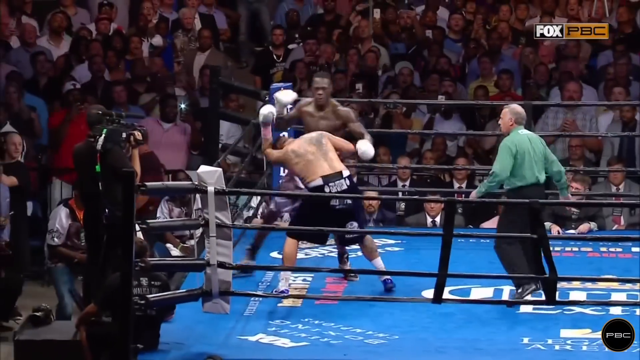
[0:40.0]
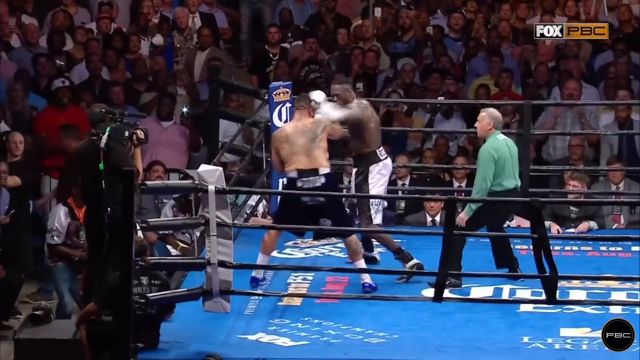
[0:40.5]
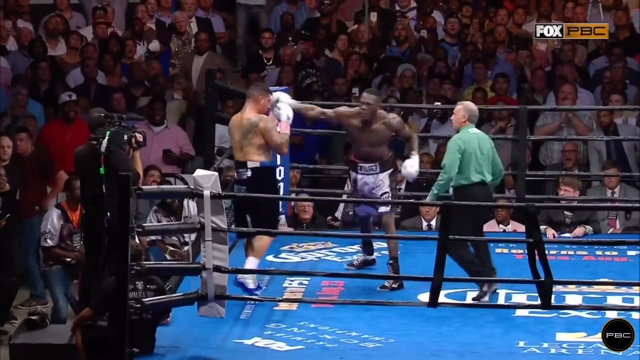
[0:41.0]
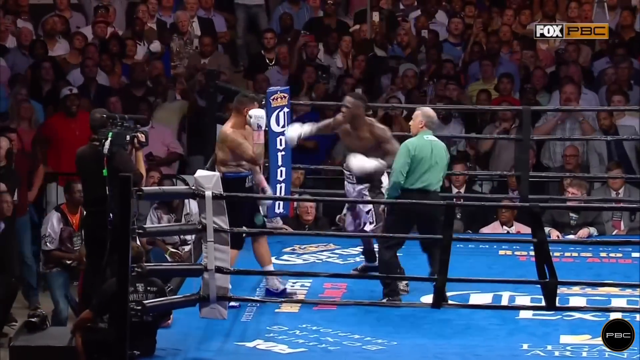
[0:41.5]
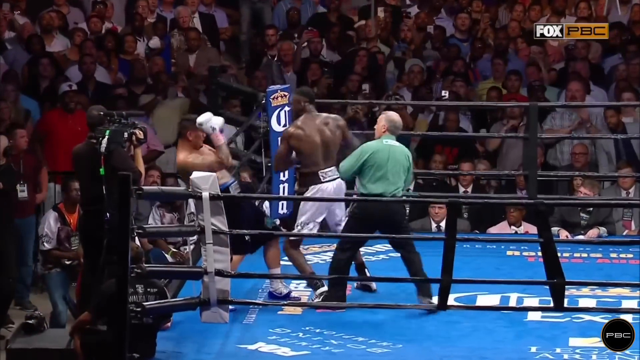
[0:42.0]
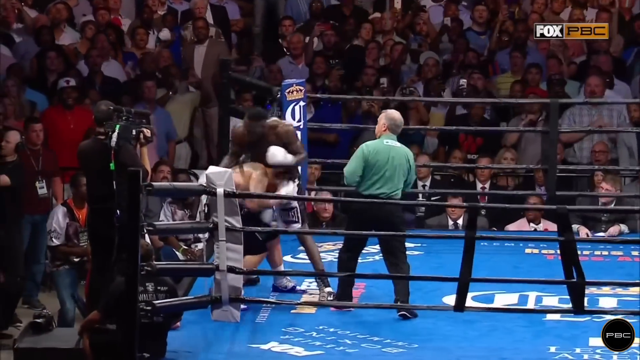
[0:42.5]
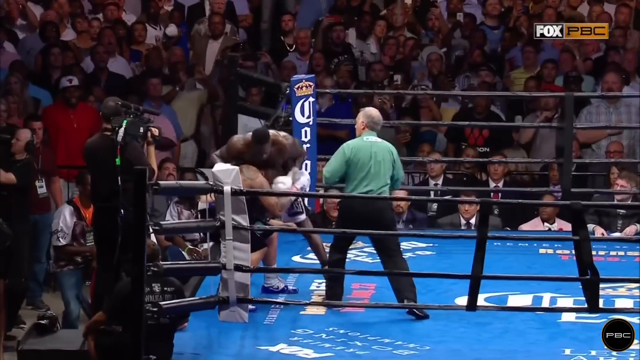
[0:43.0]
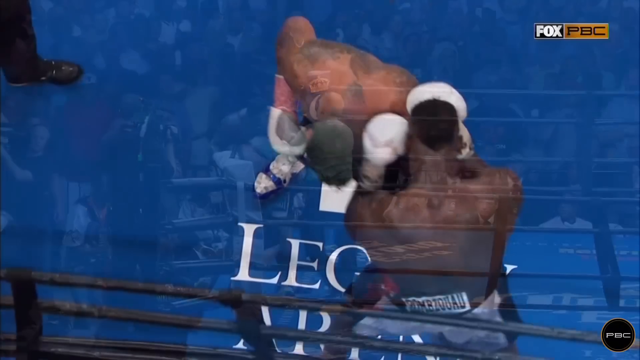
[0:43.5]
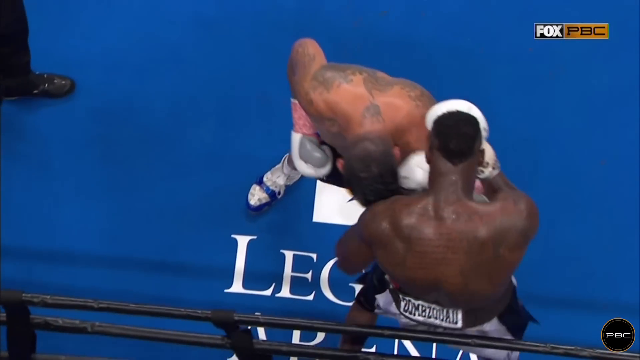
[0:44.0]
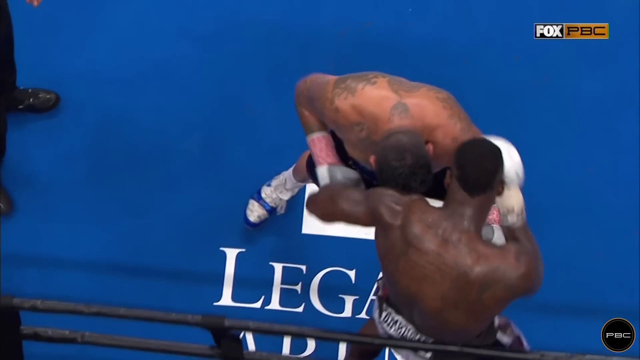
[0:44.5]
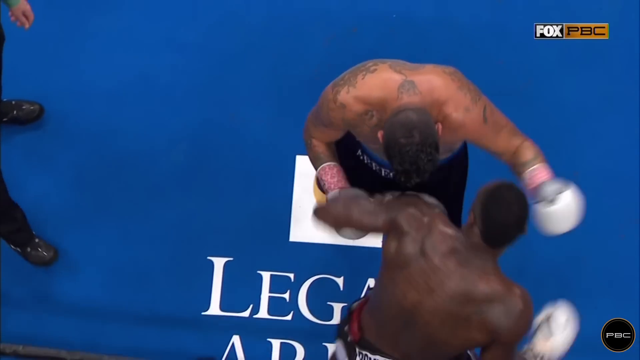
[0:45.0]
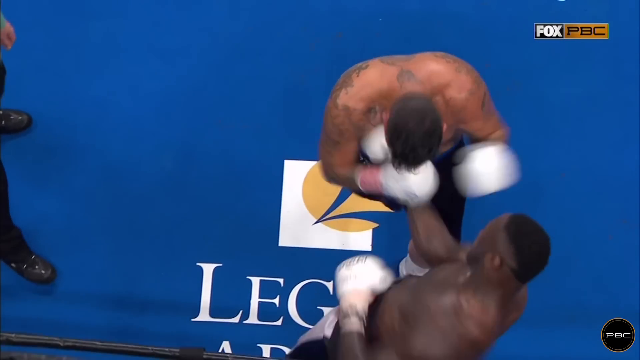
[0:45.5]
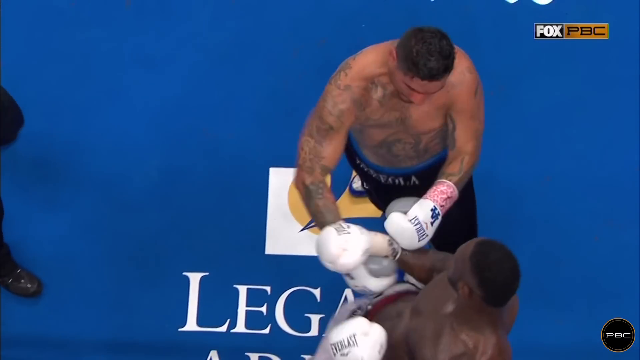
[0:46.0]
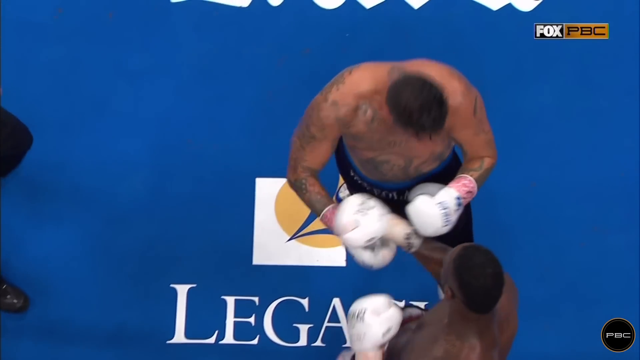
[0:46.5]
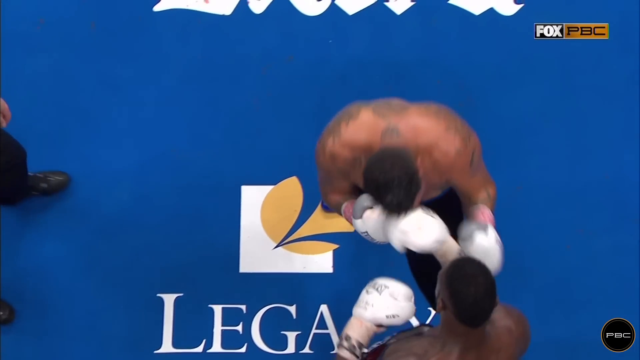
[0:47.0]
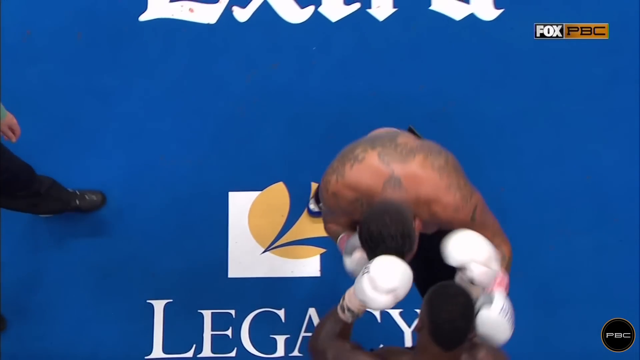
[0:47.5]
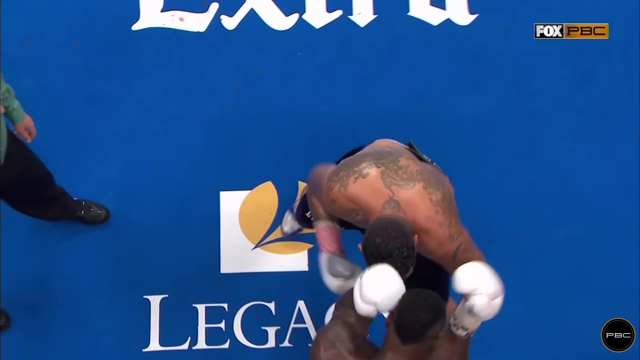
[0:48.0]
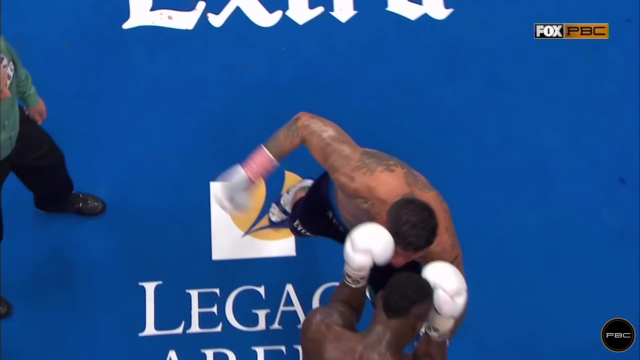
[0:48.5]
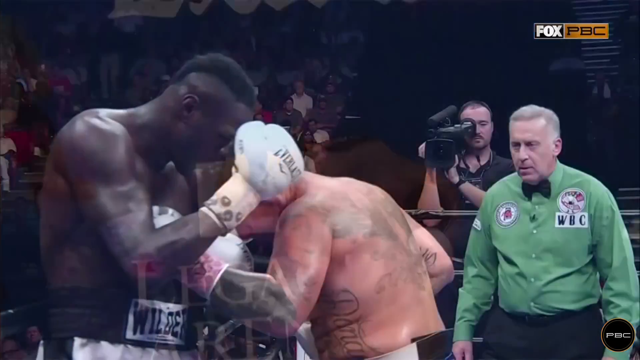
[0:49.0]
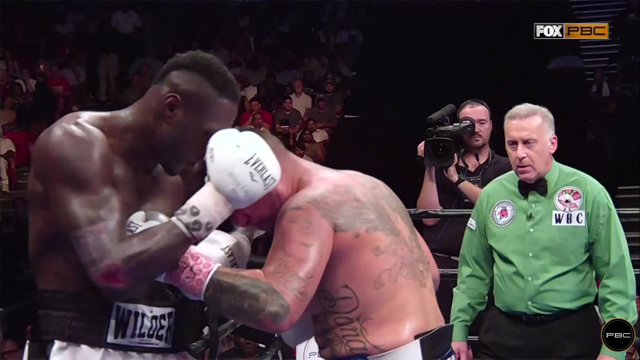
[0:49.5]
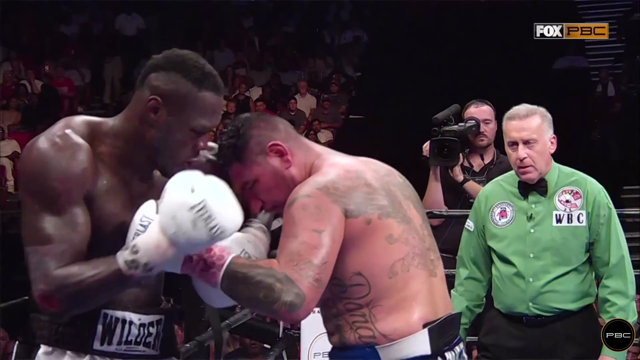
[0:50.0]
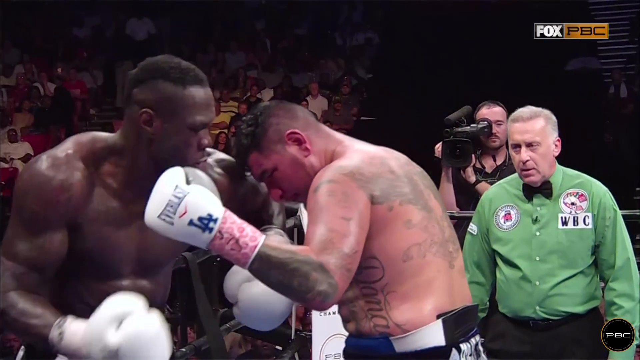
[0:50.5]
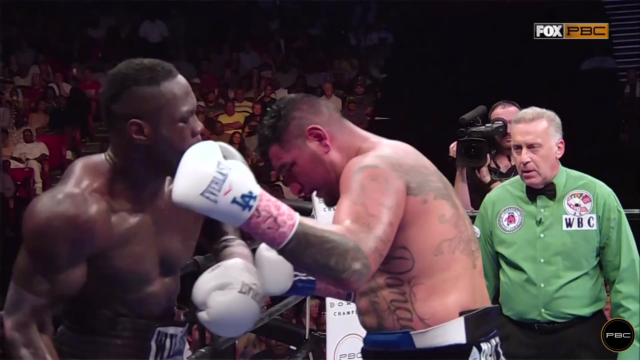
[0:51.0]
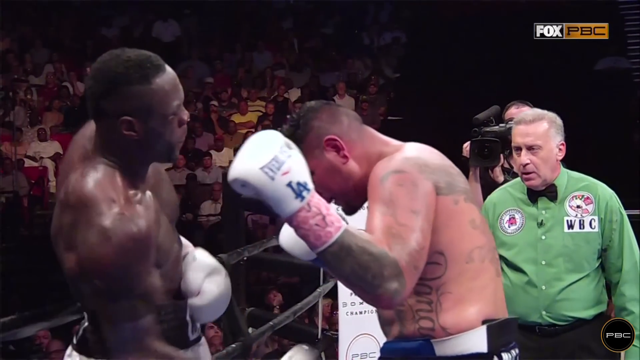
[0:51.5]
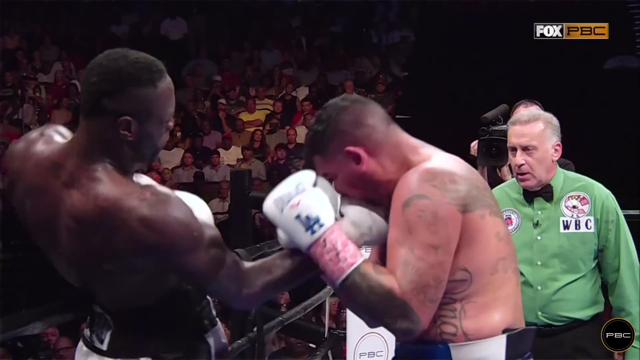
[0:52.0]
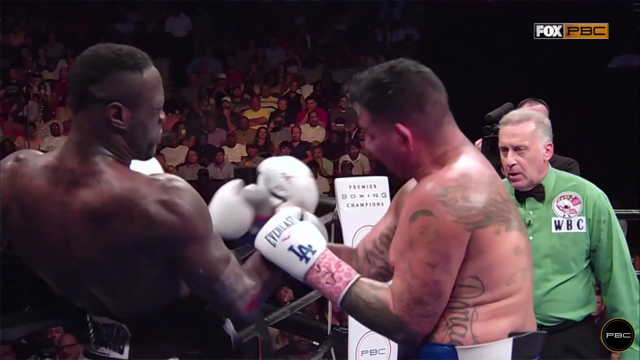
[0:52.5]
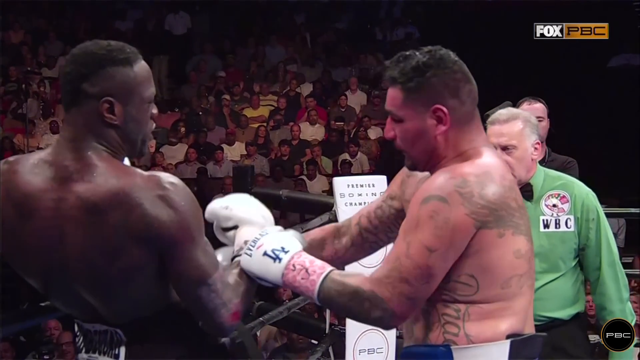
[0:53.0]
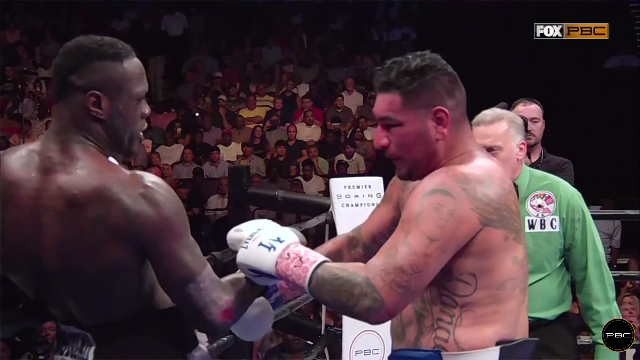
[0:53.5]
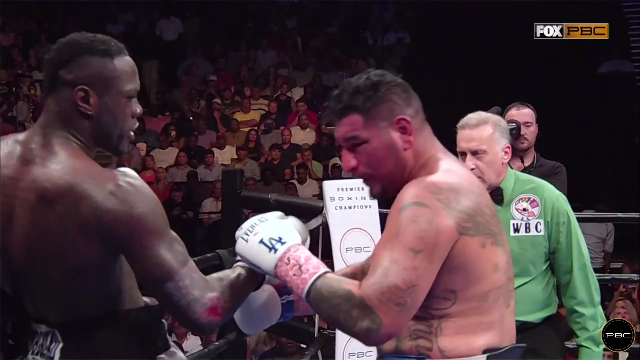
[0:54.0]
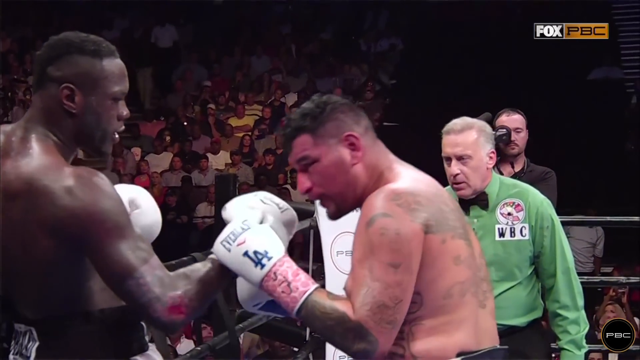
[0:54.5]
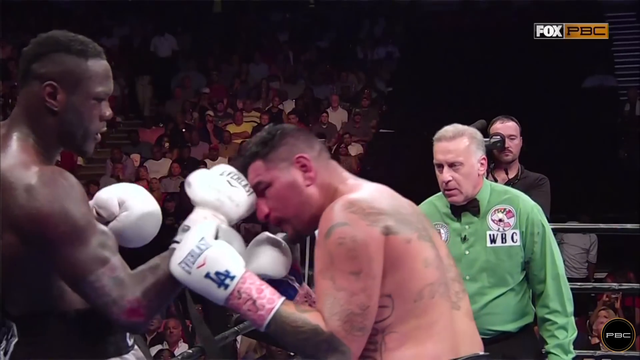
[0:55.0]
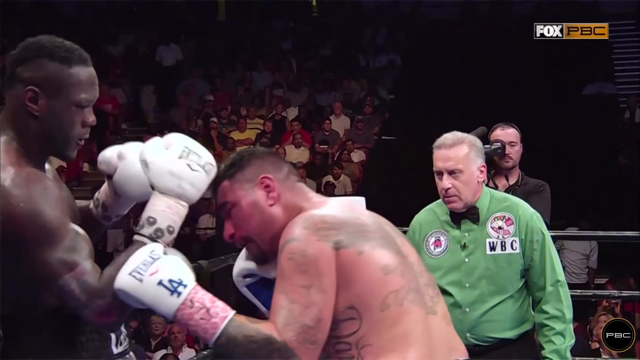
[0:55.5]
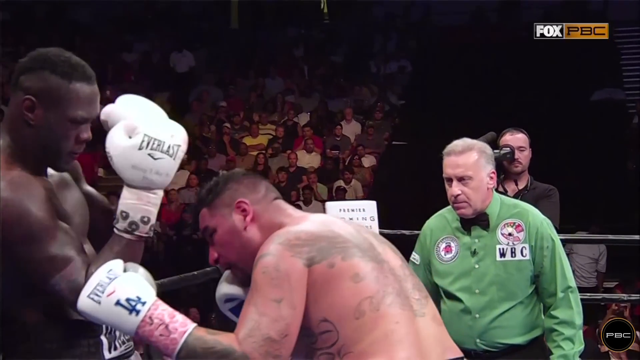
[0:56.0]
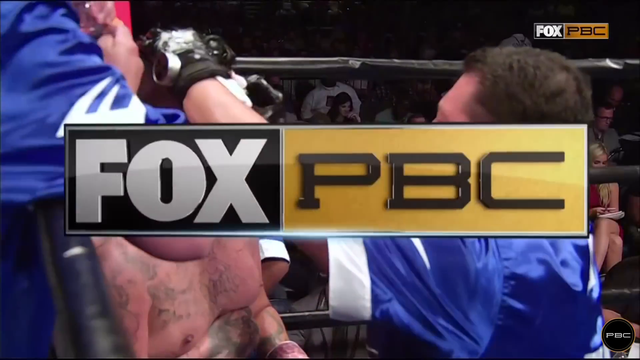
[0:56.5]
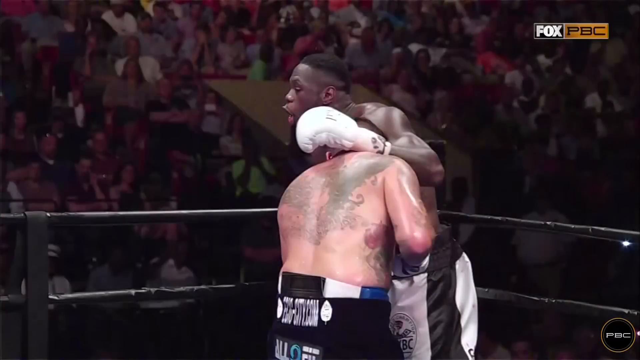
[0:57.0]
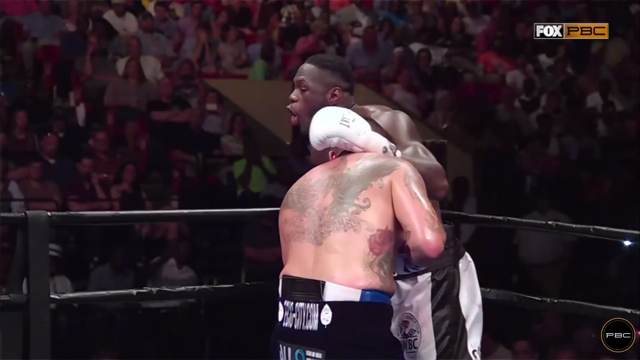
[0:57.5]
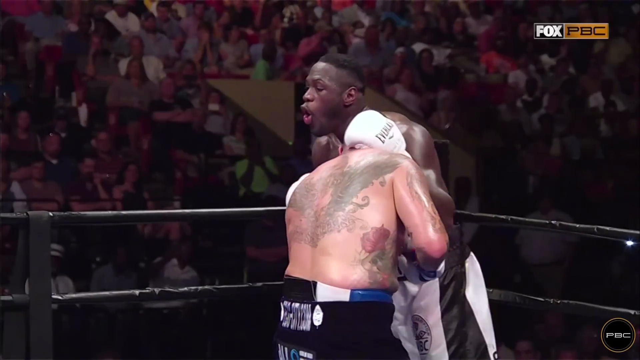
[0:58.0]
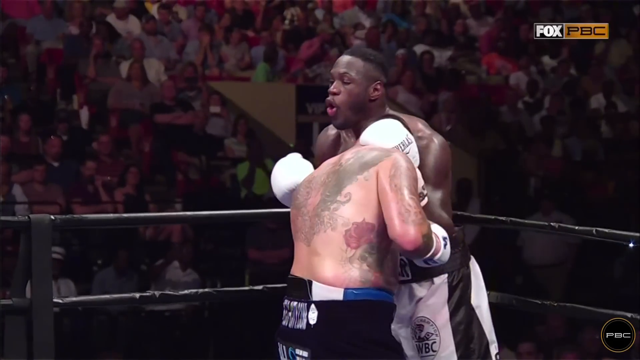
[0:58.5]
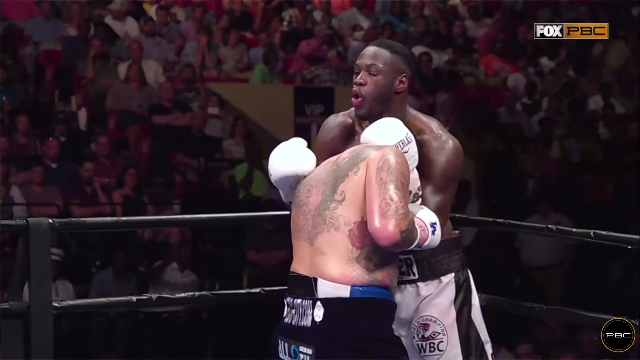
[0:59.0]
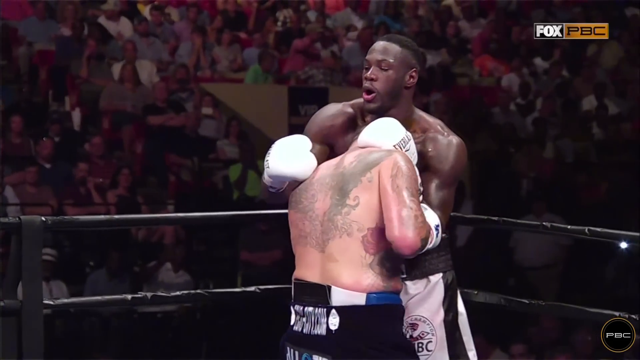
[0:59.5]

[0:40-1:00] A boxing match involving a boxer called Areola is shown in close-up: the boxer of African descent throws punches at an opponent who has tattoos all over his torso. At one point the African boxer has the other in a headlock and delivers a series of left and right uppercuts. In one segment the referee pulls down the arm of one of the boxers. The boxers fight near the side of the ring, very close to the horizontal ropes rather than in the center. The floor shows advertising for Corona Extra and a company called Legacy, and logos in the top right corner show the match is broadcast by Fox PBC.